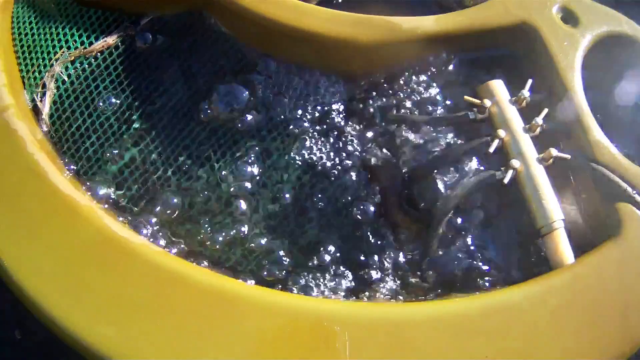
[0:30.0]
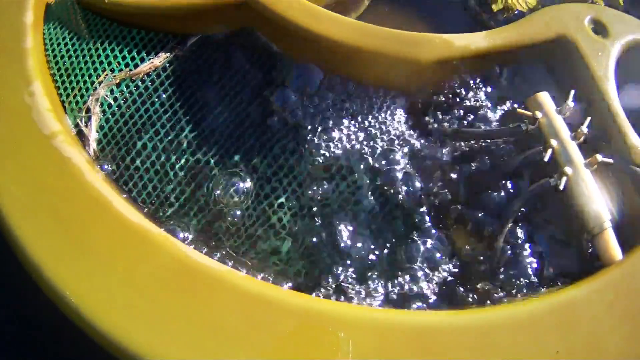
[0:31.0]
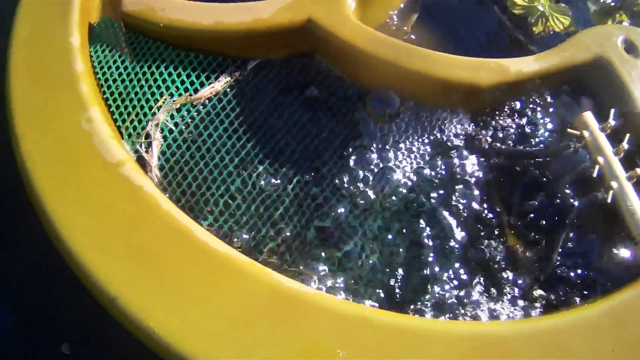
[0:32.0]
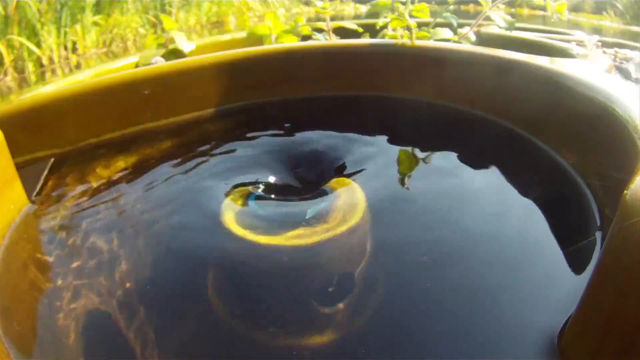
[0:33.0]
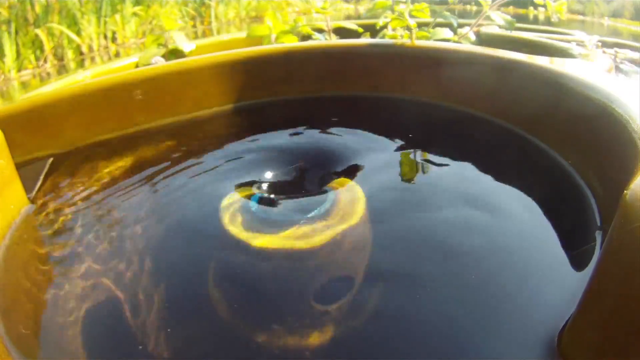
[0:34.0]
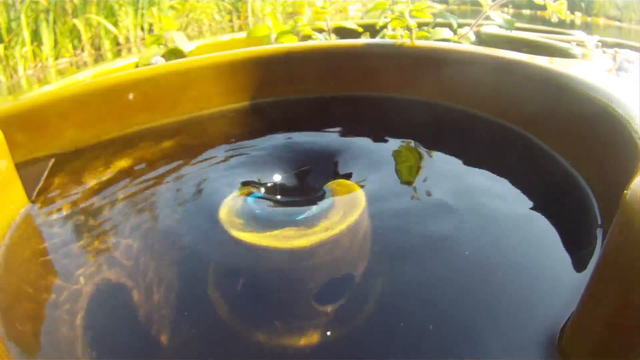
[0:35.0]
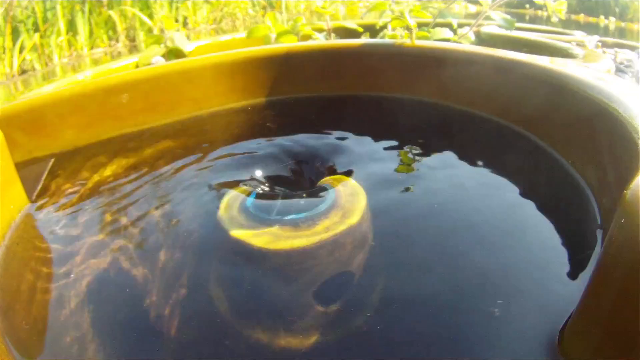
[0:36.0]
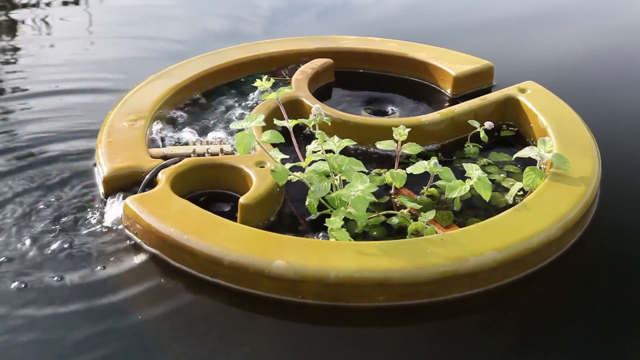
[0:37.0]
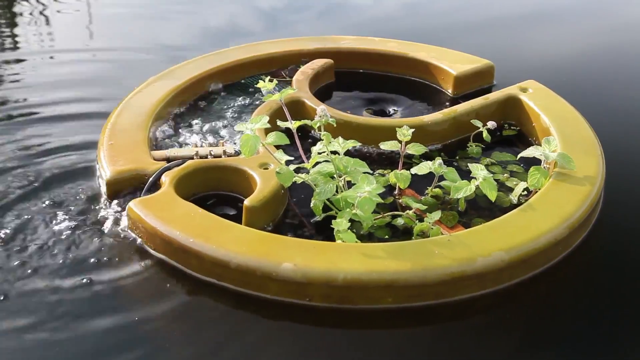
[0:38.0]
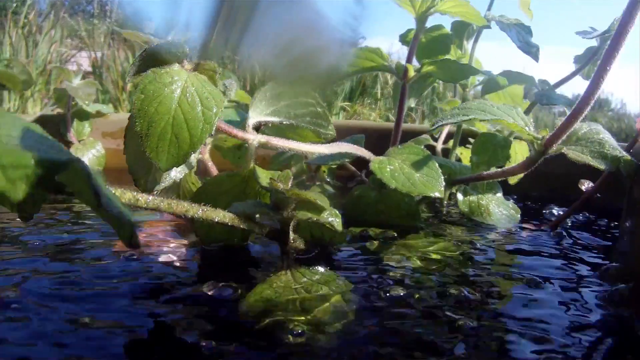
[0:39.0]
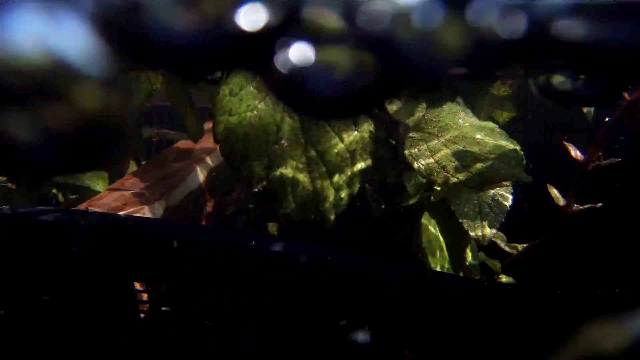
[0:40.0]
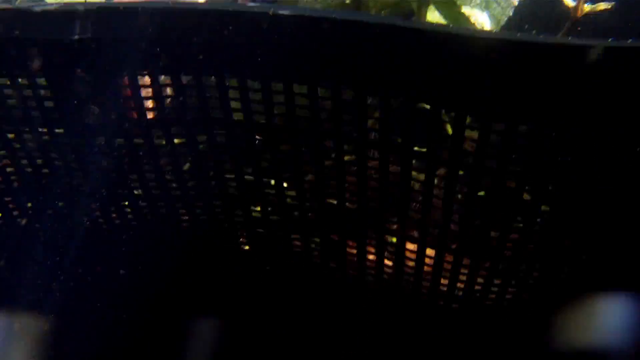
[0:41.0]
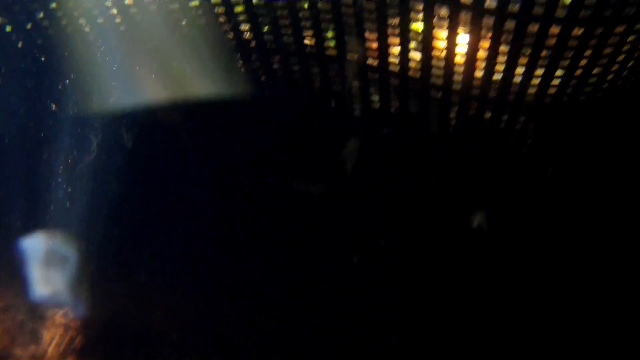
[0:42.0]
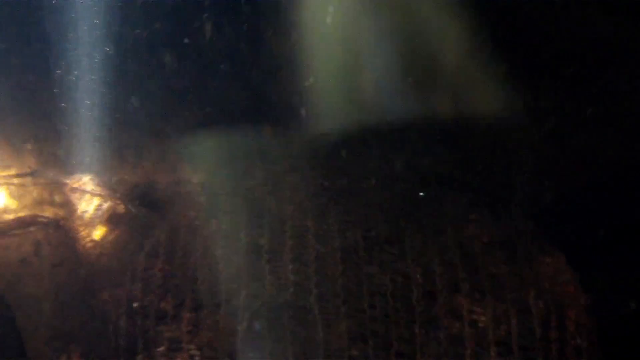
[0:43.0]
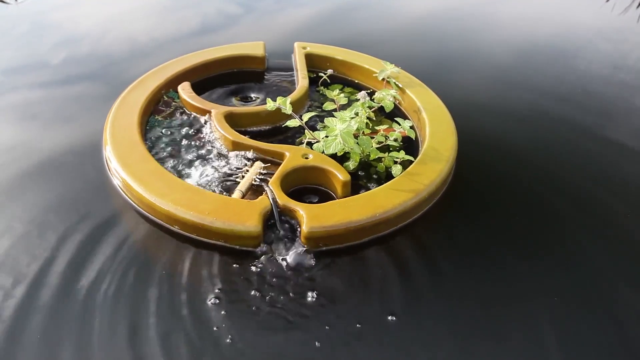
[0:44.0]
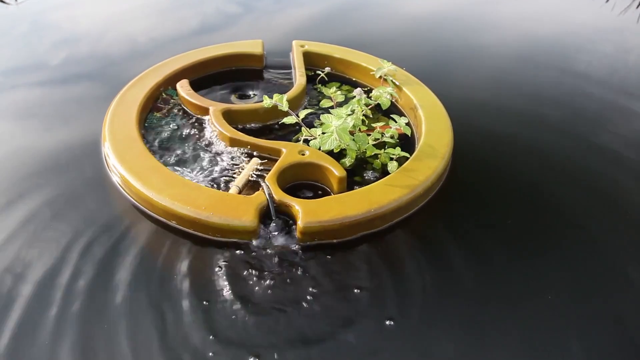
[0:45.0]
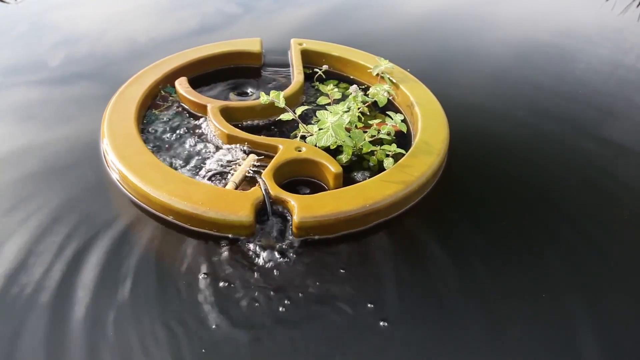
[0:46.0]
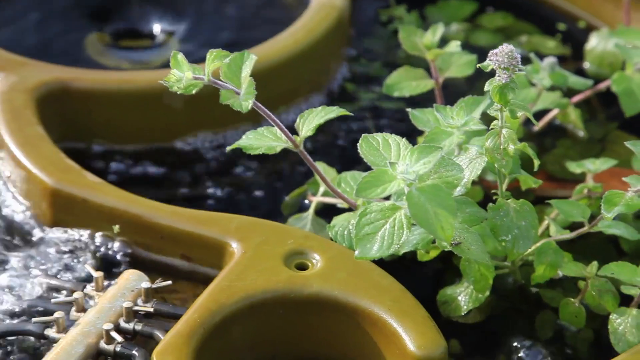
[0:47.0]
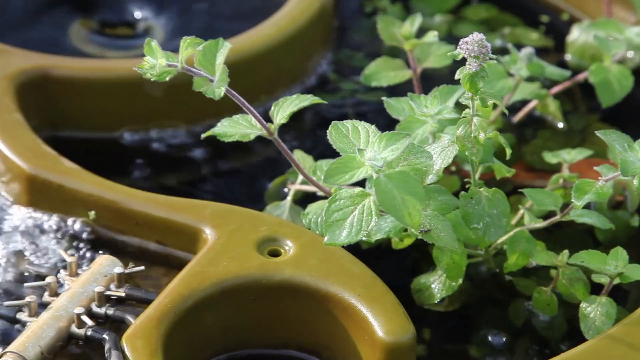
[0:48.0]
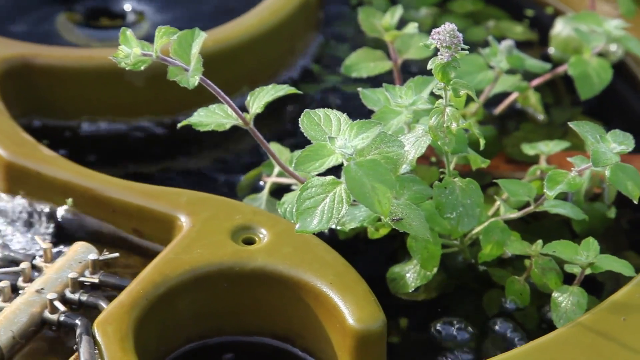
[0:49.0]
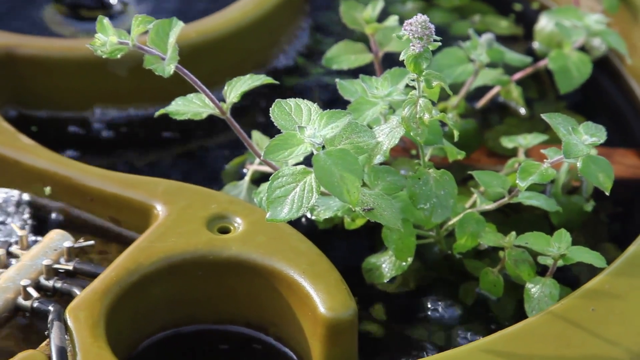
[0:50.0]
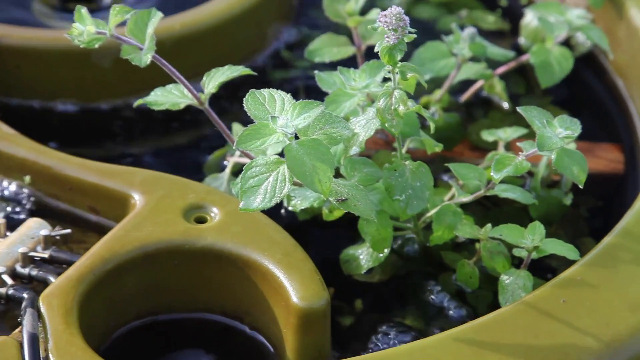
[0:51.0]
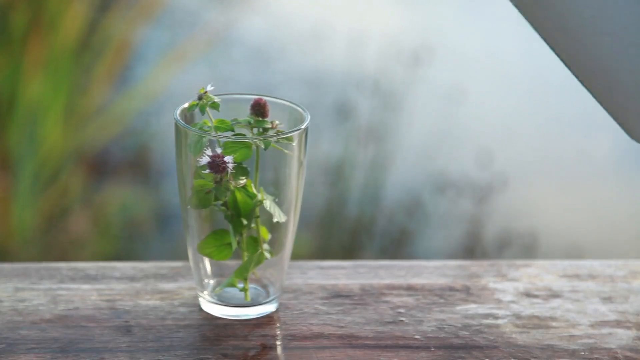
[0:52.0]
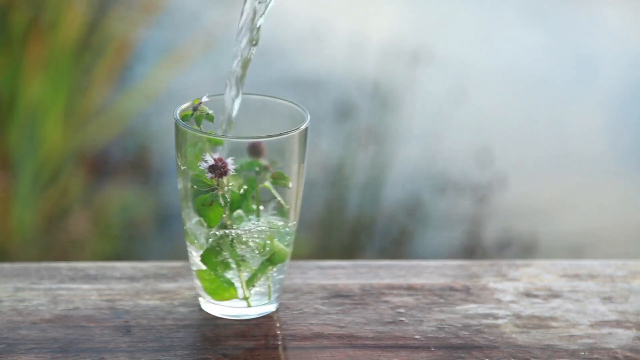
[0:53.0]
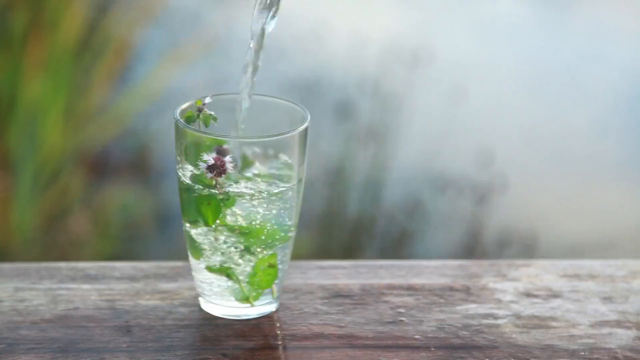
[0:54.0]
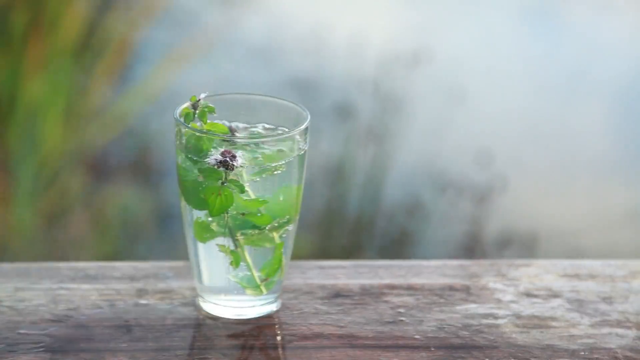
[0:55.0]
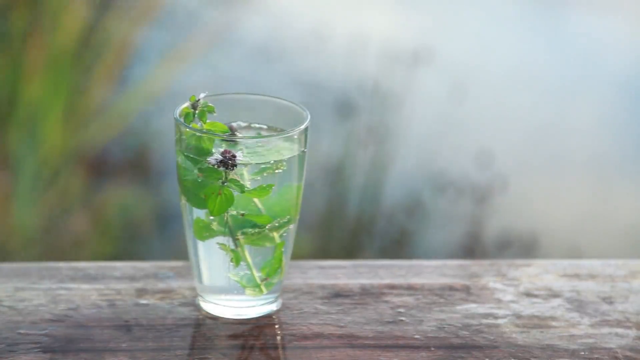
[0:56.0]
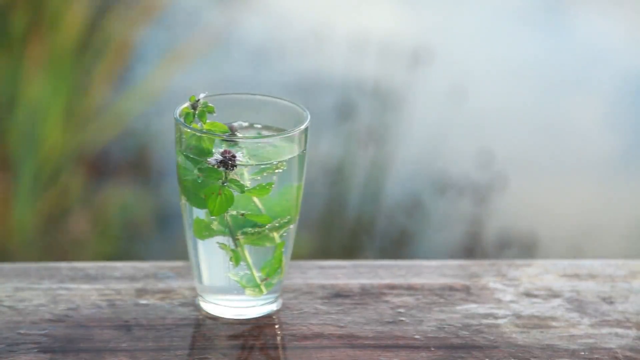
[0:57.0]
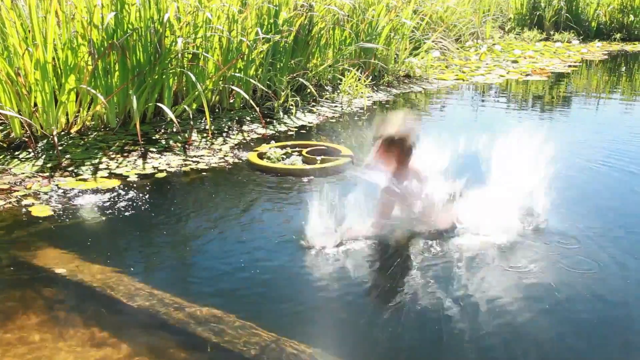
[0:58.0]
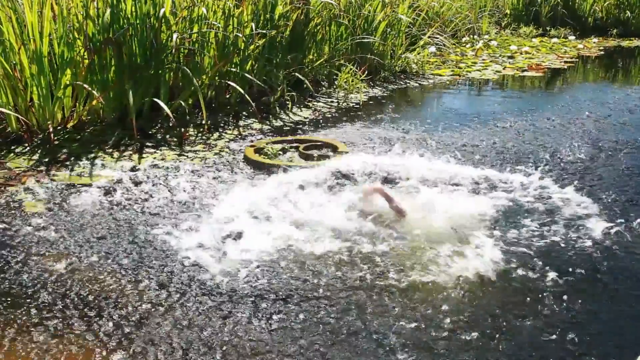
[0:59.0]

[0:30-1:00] The camera captures a yellow object with a green net inside it, and water is seen moving inside the object. The camera then focuses on the other part of the object, where the water moves in a circular way. The video again focuses on some bubbles inside the bucket. A transition shows some plants, and the net is visible. The video then moves on top of the object, where some plants are seen. Next, a glass is placed on a table with some of the plants that were inside the object. Hot water is poured into the glass, and steam comes out of it. Later a child, a boy, comes to the pool and jumps into the water just next to the object.